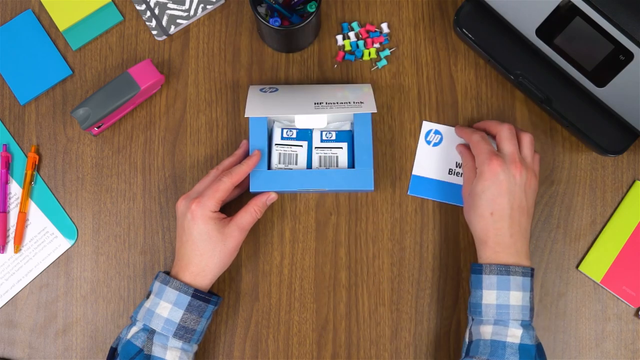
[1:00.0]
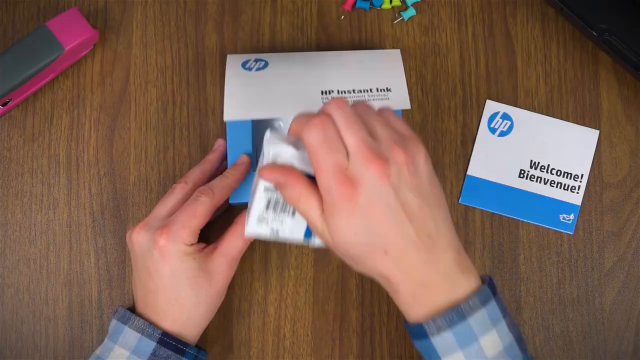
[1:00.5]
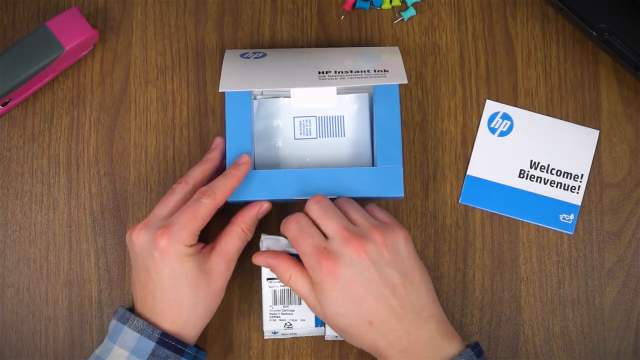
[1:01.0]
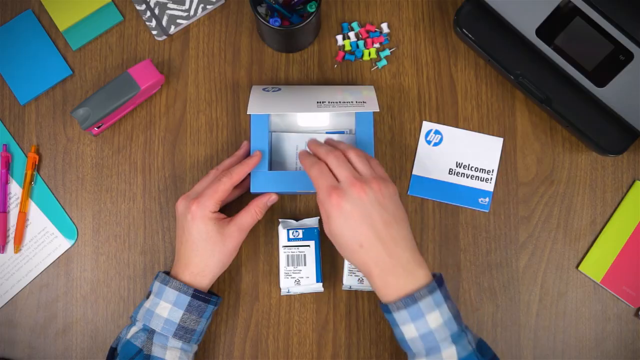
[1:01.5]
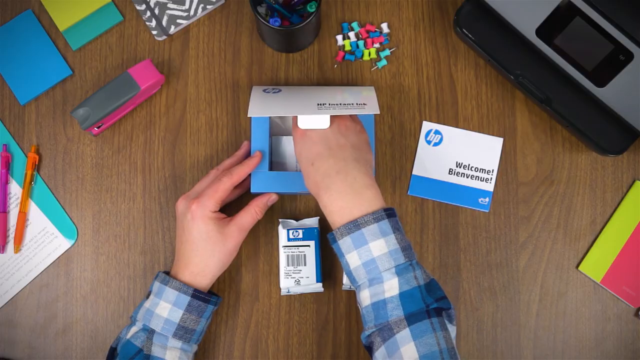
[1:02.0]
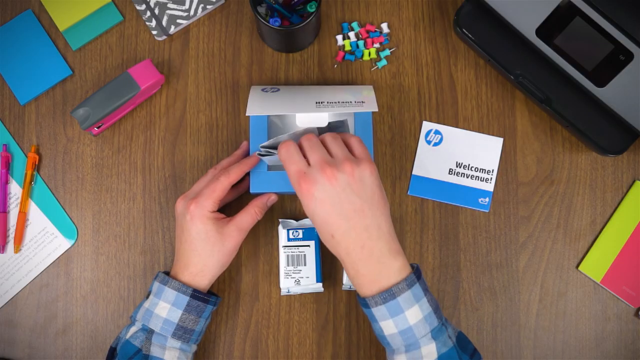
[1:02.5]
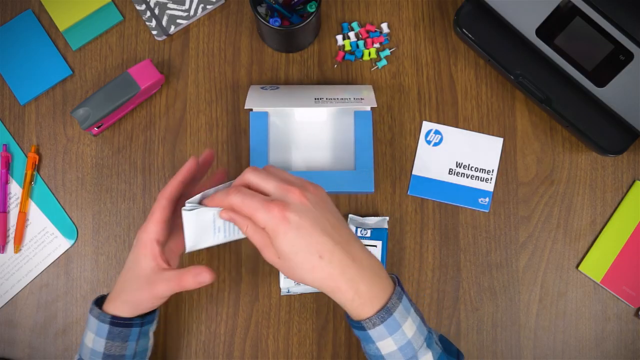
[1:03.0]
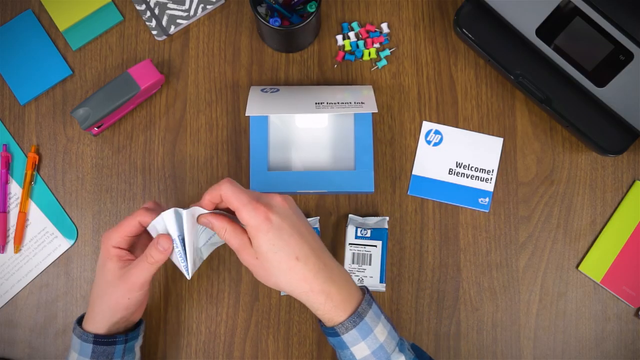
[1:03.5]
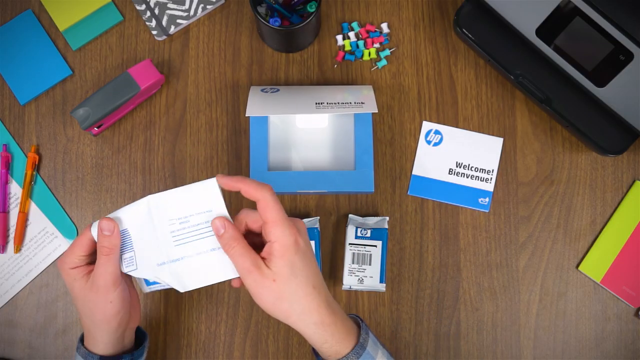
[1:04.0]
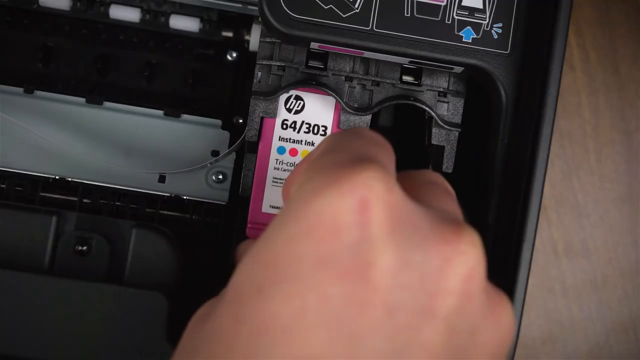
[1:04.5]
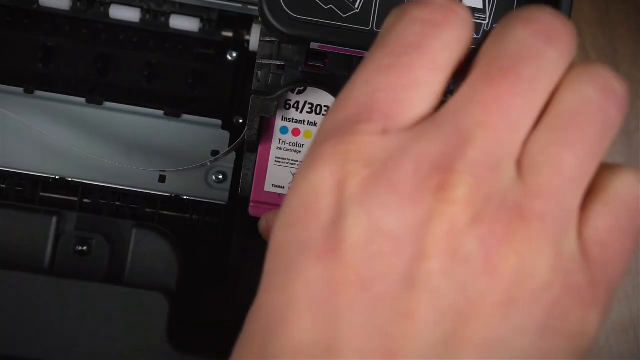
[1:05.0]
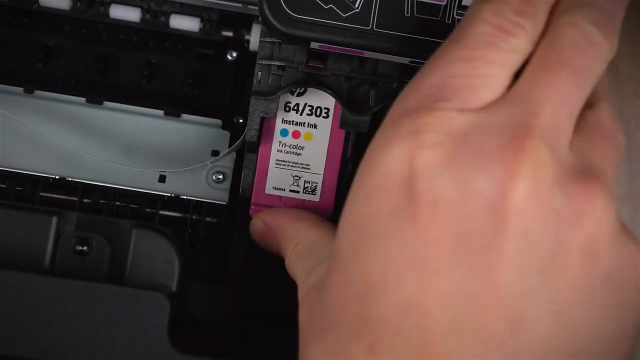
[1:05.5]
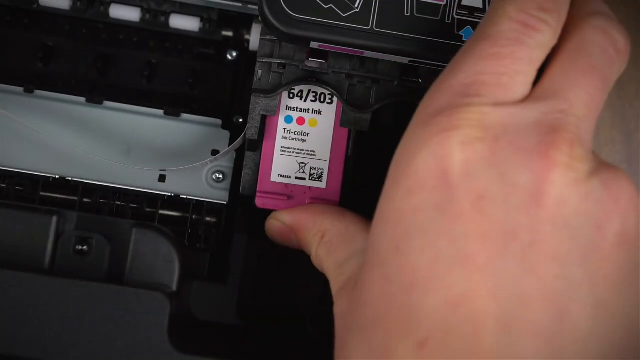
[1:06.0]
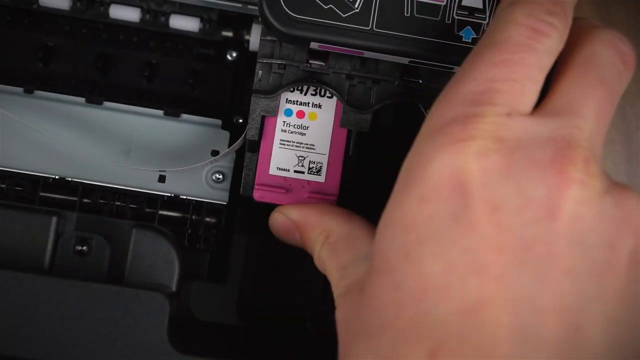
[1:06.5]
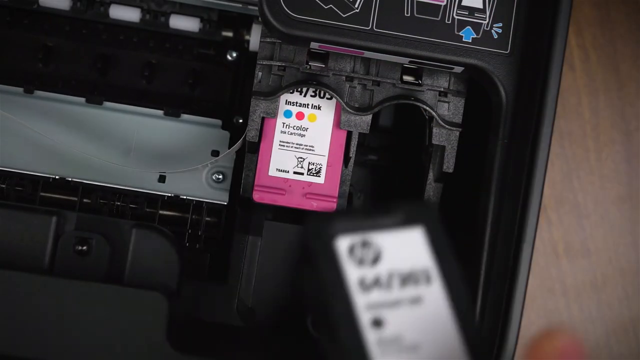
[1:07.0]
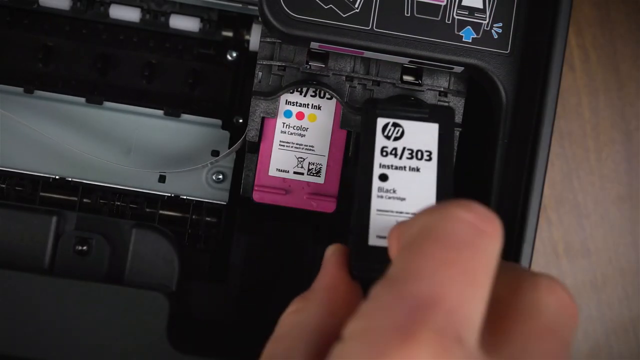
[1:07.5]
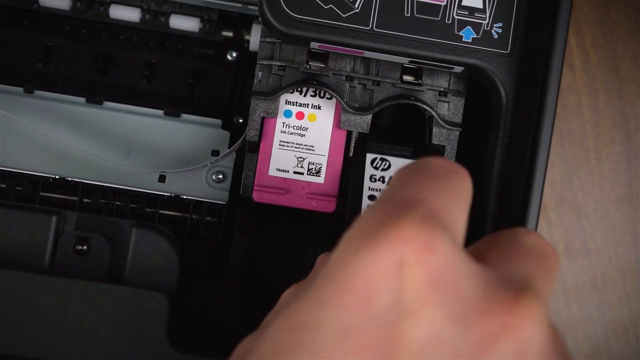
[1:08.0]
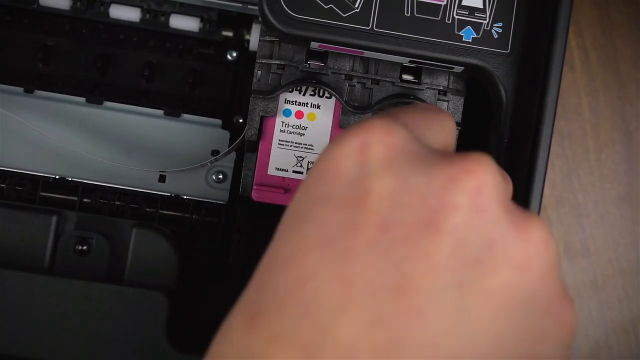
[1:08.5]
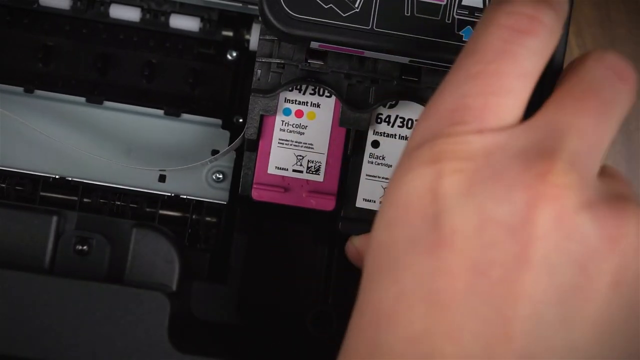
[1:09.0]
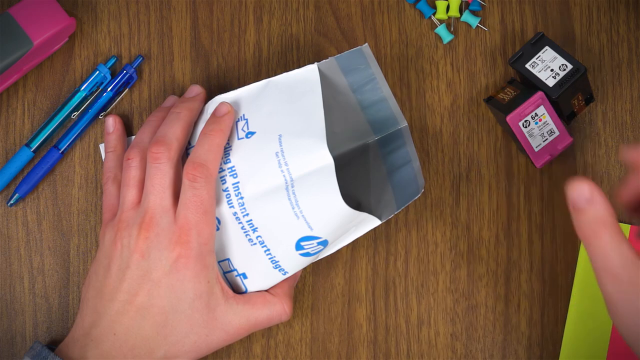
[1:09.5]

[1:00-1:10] The desk holds various materials: pens, a blue clipboard, a blue post-it, a green post-it, a yellow post-it, a pink and gray stapler, and cartridges carried in a blue box, in colors including blue and pink, which are put into the printer. The cartridges are square and thin and go into two slots to the right of the printer; one is pink and the other black. Next an envelope is shown where the cartridges go when they are used up, and then the video returns to the desk and shows the person putting the cartridges in.